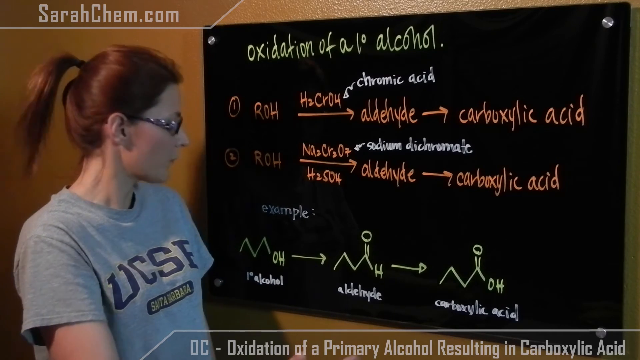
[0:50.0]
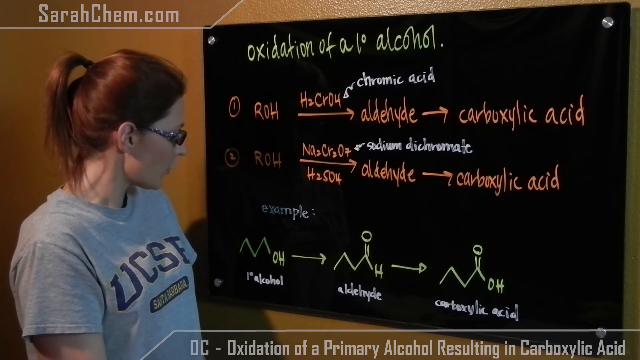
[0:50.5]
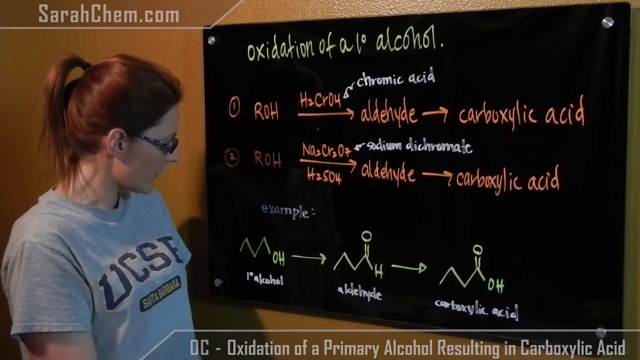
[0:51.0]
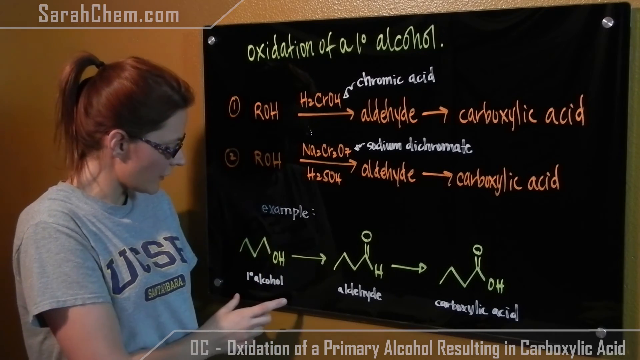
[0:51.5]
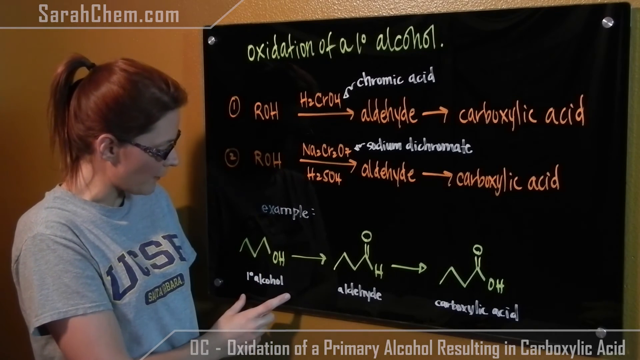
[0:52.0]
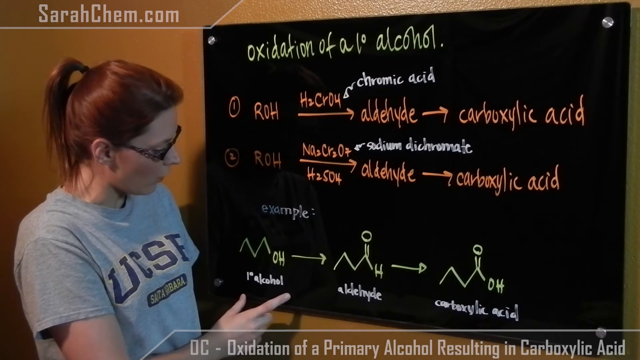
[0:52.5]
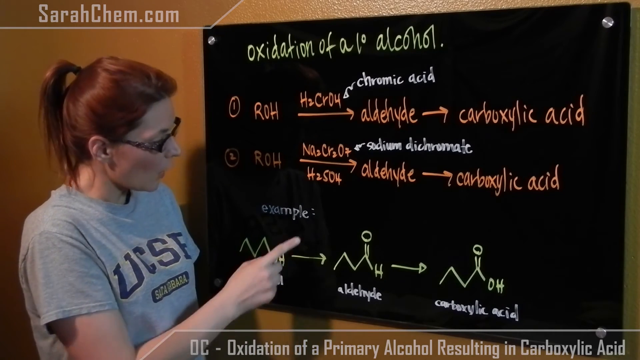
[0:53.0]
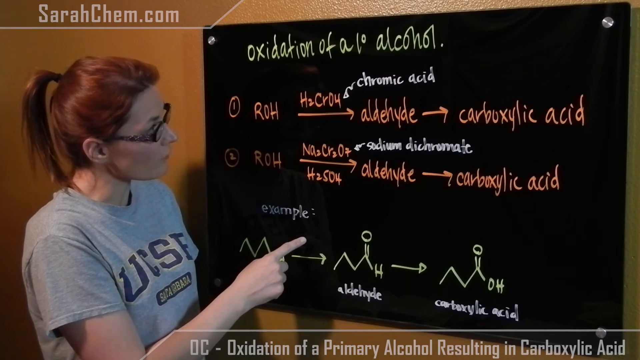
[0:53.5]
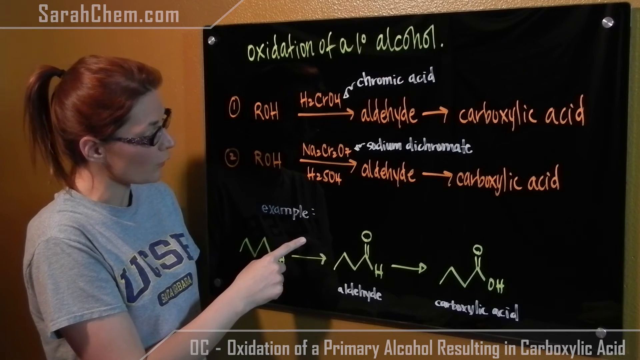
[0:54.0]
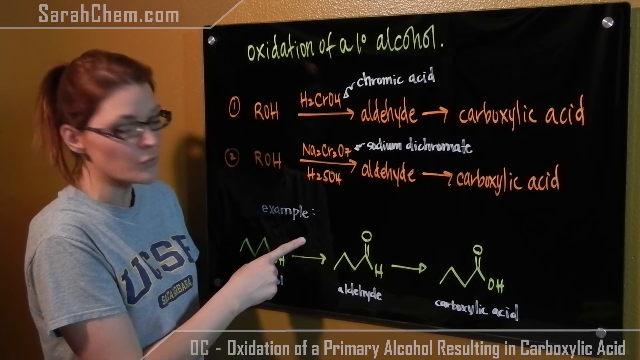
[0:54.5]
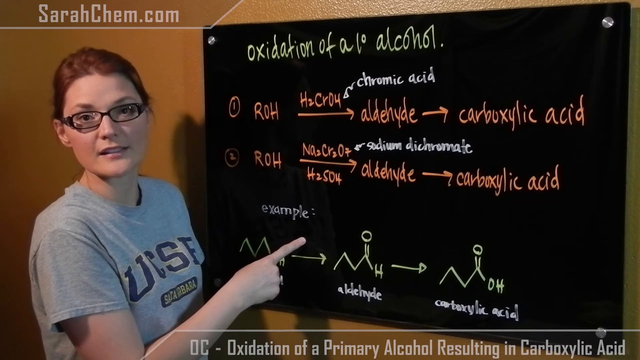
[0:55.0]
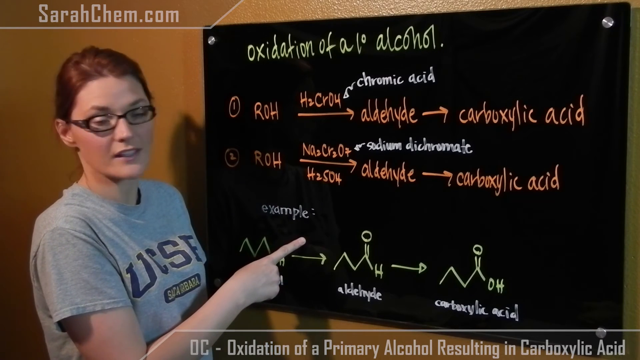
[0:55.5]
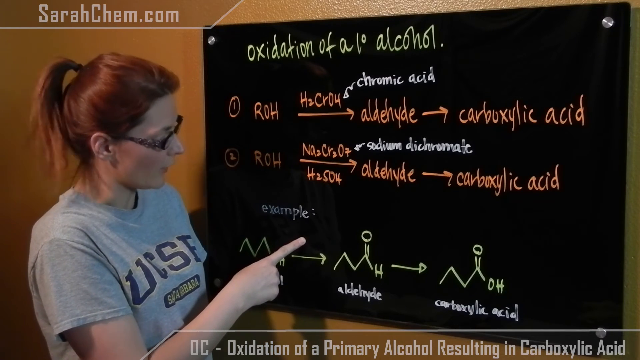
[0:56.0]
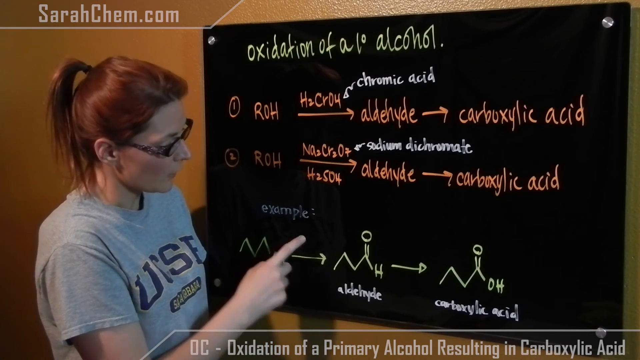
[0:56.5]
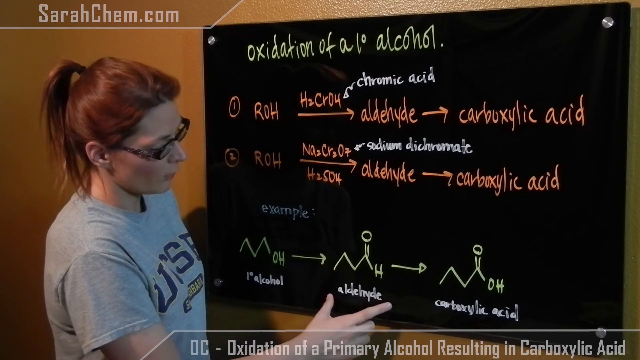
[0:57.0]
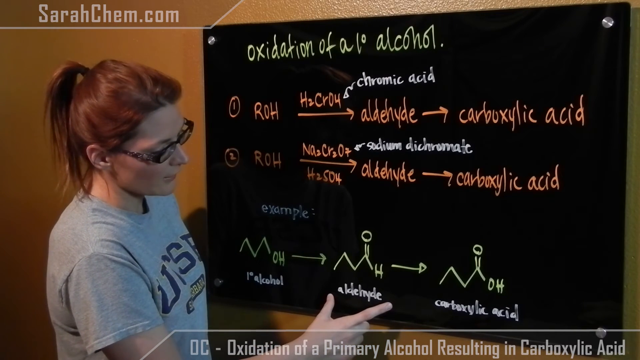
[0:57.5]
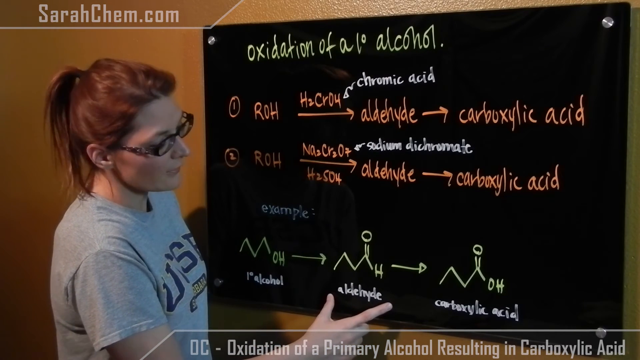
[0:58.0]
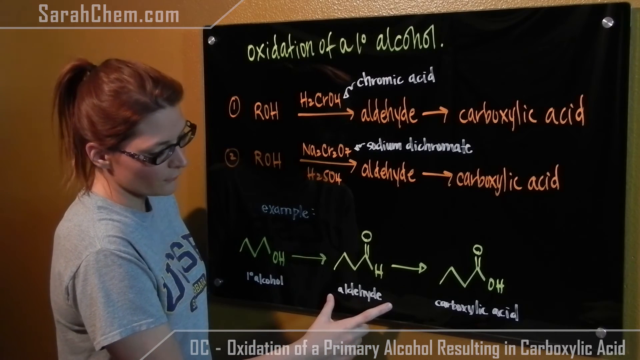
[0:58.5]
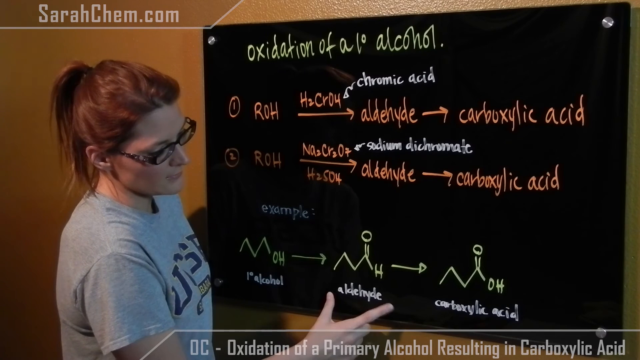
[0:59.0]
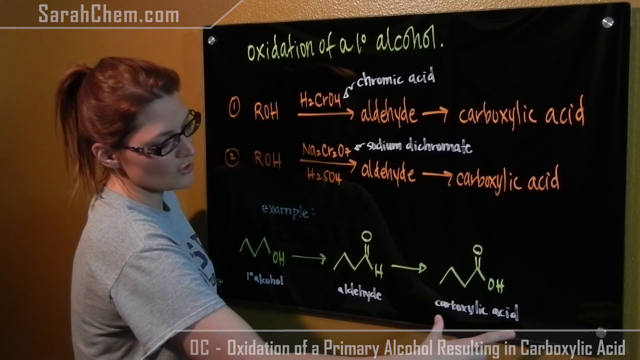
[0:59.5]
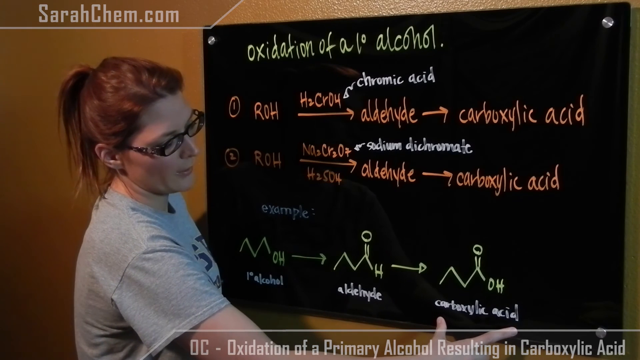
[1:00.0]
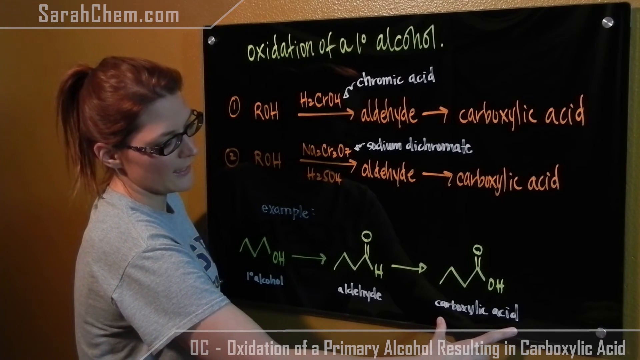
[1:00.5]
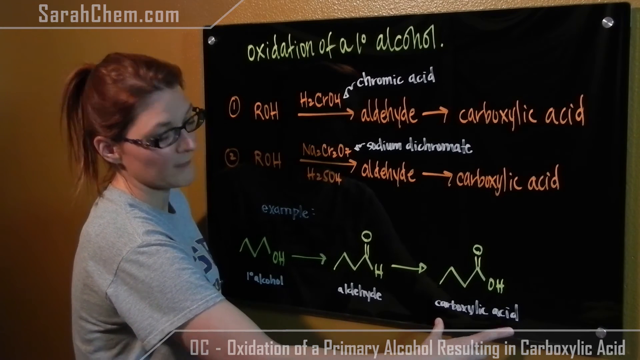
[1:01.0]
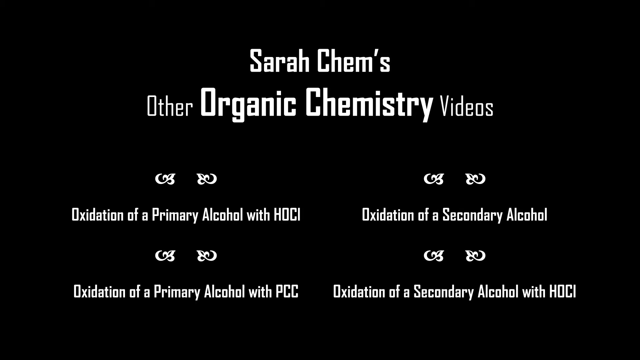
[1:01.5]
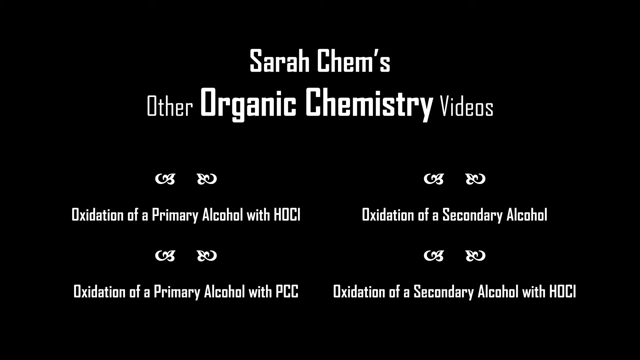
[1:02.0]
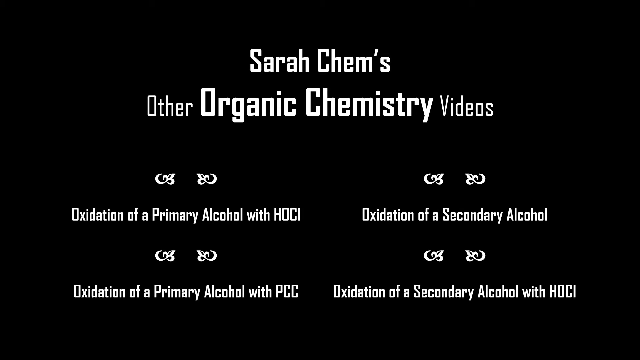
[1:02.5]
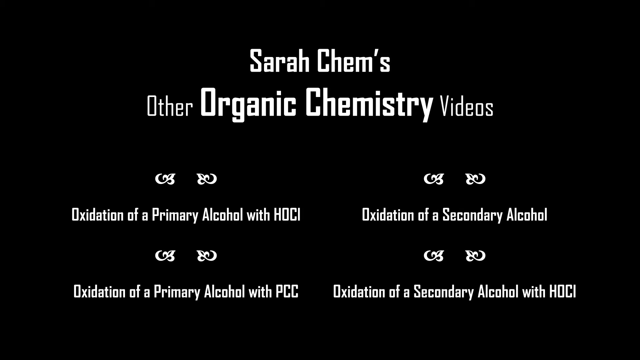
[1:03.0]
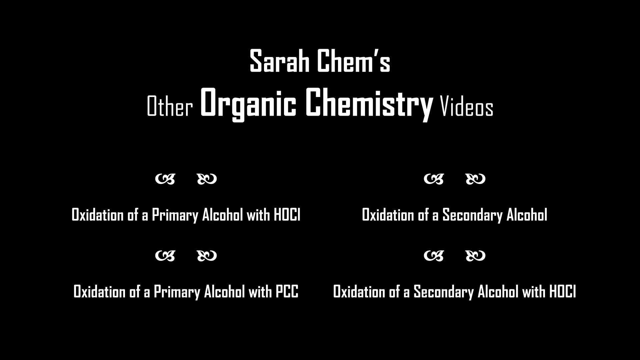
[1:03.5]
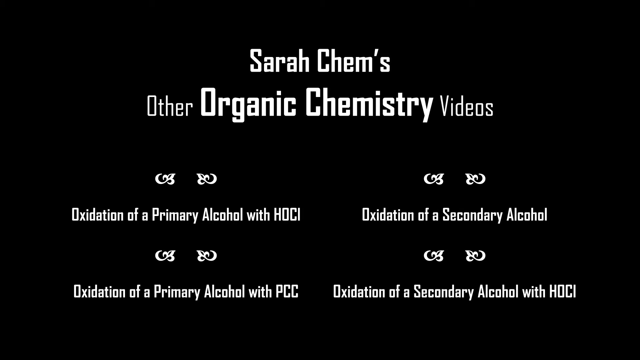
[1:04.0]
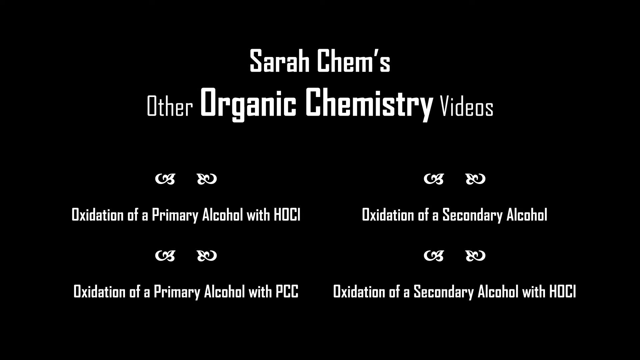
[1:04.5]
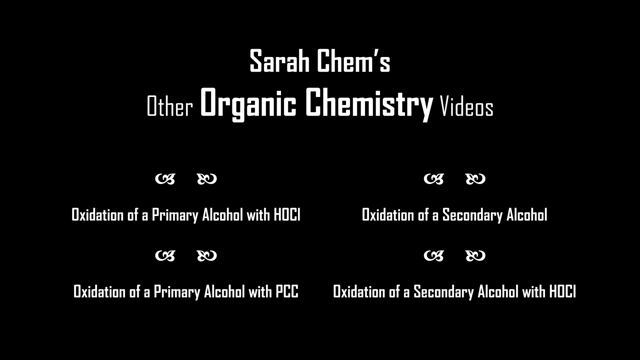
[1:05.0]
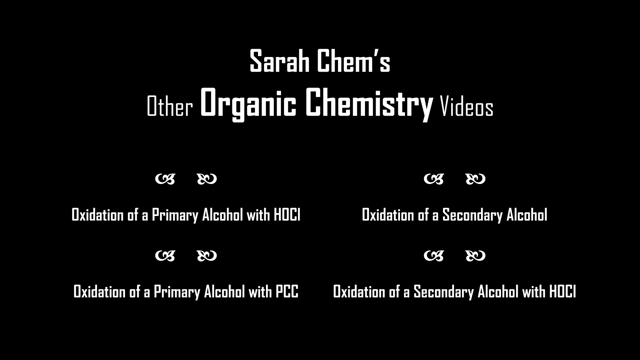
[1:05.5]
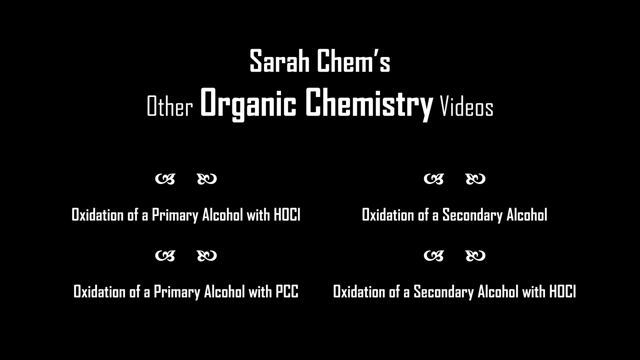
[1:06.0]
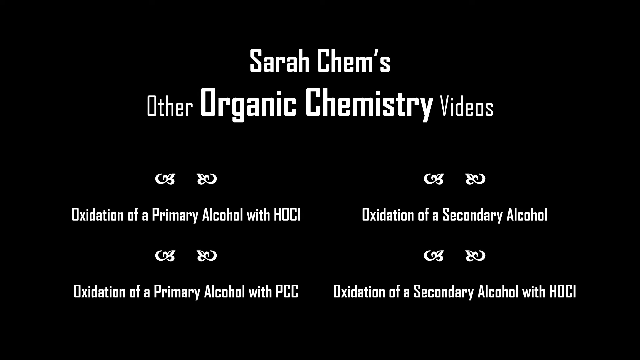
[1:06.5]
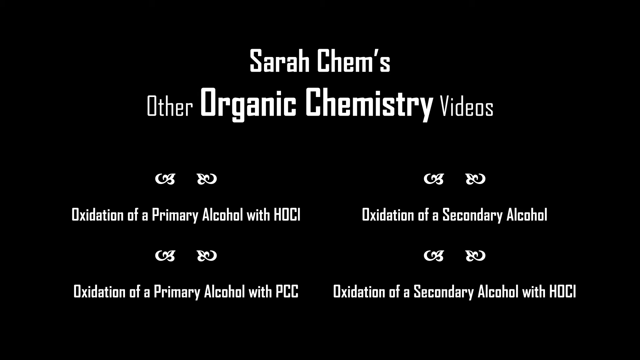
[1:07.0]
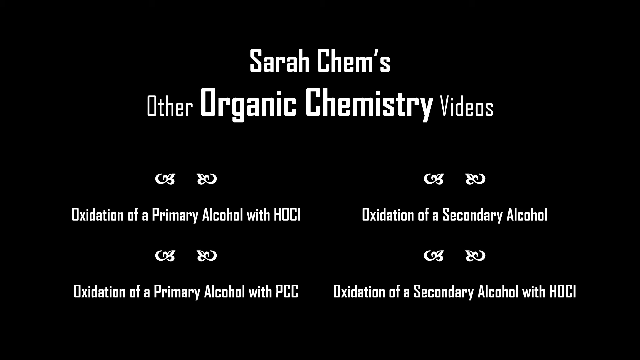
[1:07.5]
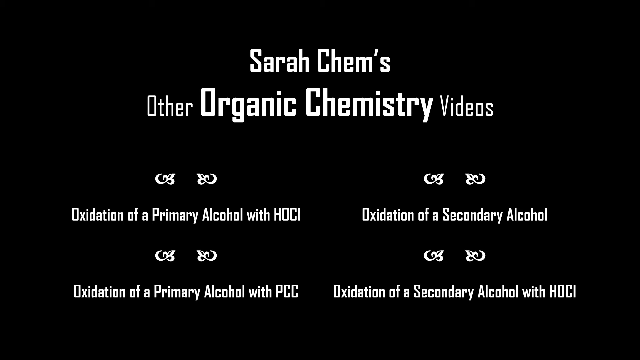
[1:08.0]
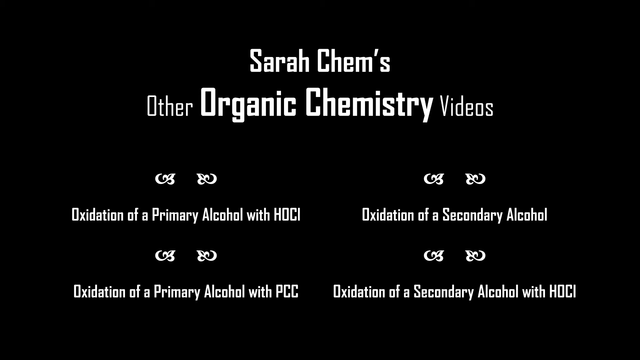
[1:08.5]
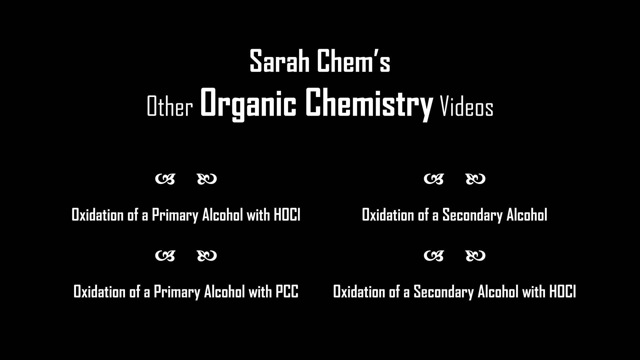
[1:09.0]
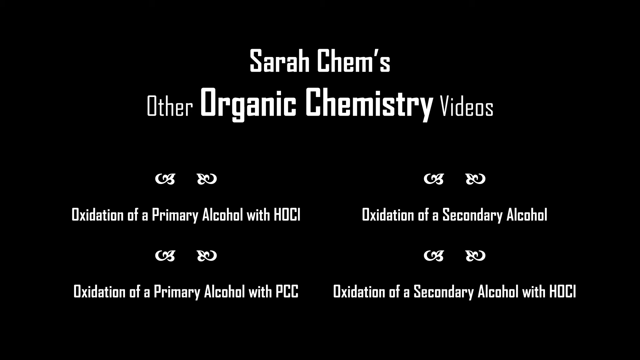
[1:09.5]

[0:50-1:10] "sarahkemp.com" is still at the top left. Sarah Kemp is on the left side of the frame wearing the grey t-shirt and glasses; her hair is red and she is white. On the right is the blackboard with oxidation of alcohol written on it, and the chemical formulas and the example are visible. Moving to the example, Sarah points at the aldehyde, explains, and then gets to the carboxylic acid. The video then shows Sarah Kemp's other organic chemistry videos in white writing on a black background: "oxidation of a primary alcohol with HOCl", "oxidation of a primary alcohol with PCC", "oxidation of a secondary alcohol", and "oxidation of a secondary alcohol with HCI".